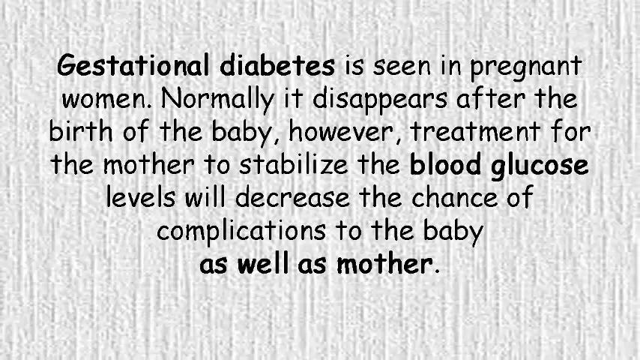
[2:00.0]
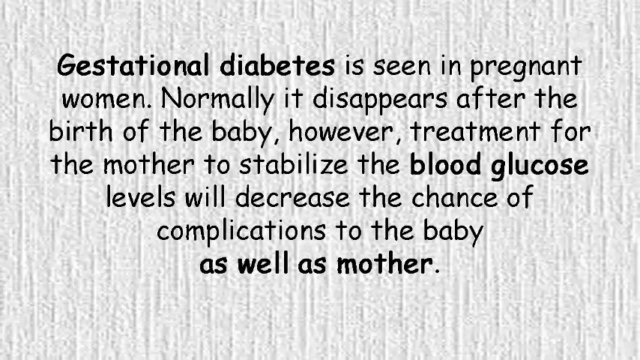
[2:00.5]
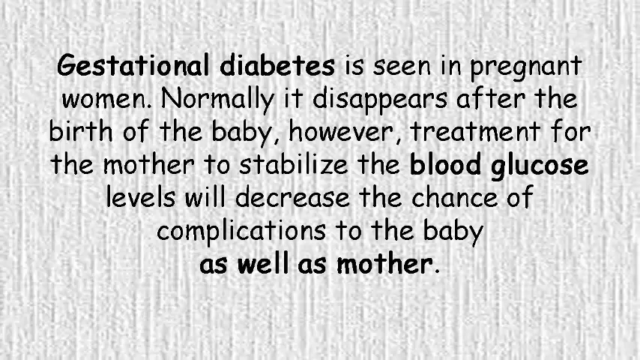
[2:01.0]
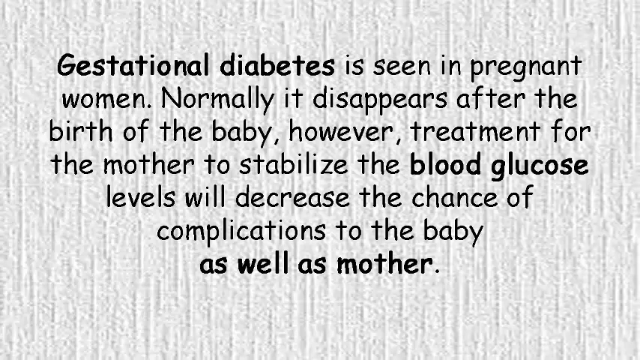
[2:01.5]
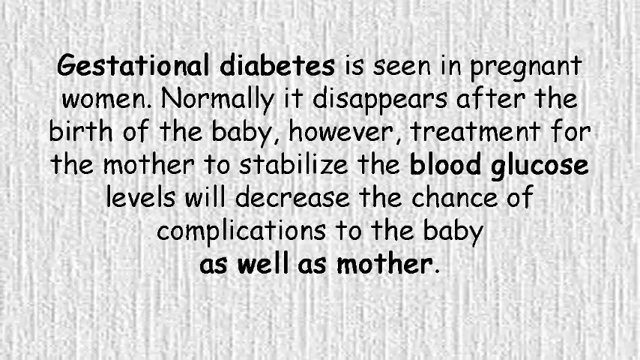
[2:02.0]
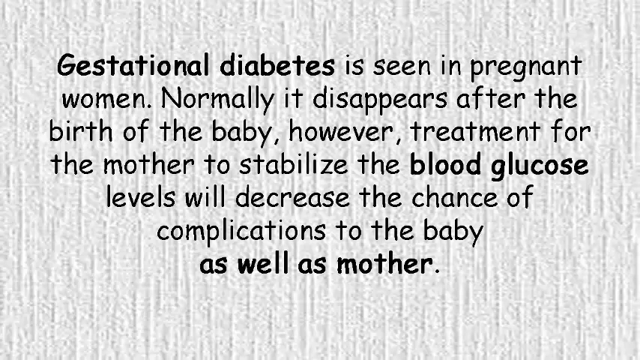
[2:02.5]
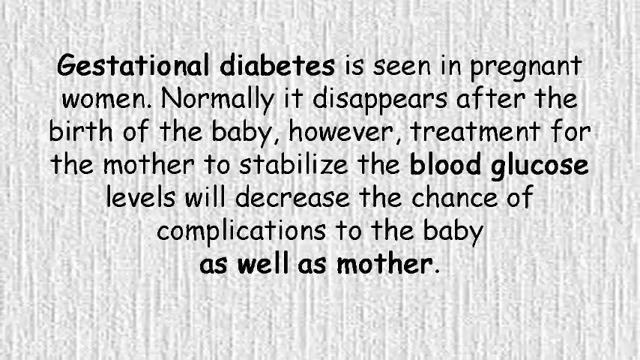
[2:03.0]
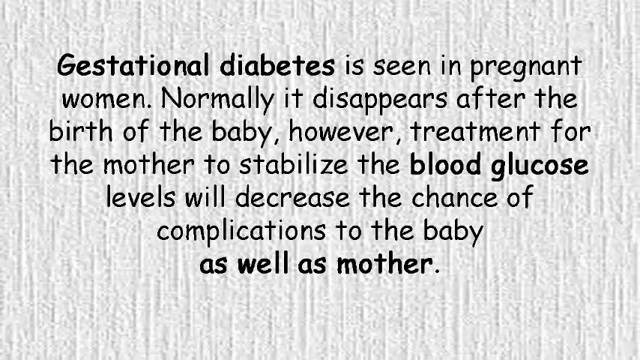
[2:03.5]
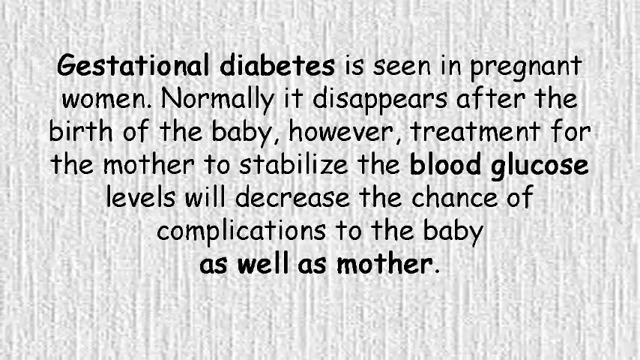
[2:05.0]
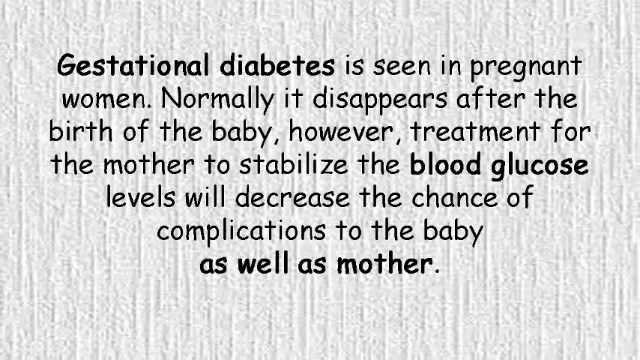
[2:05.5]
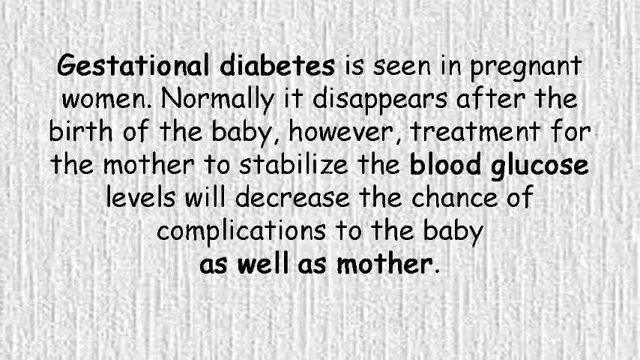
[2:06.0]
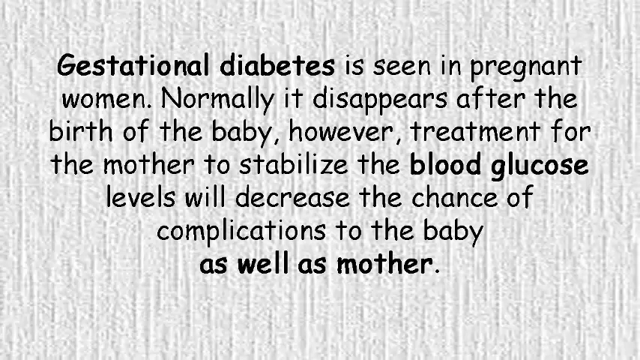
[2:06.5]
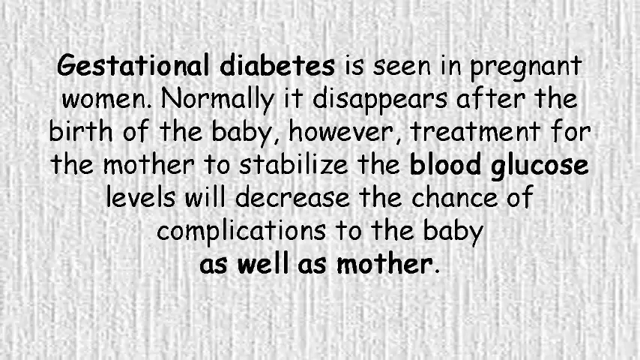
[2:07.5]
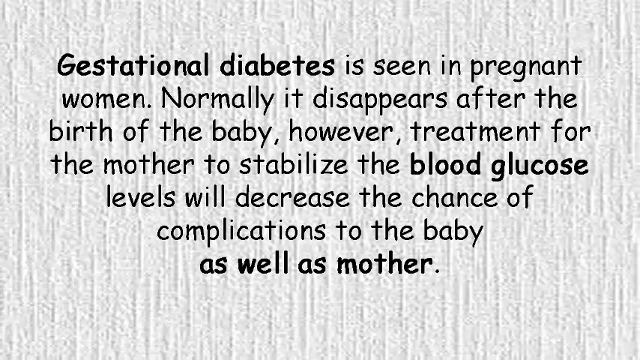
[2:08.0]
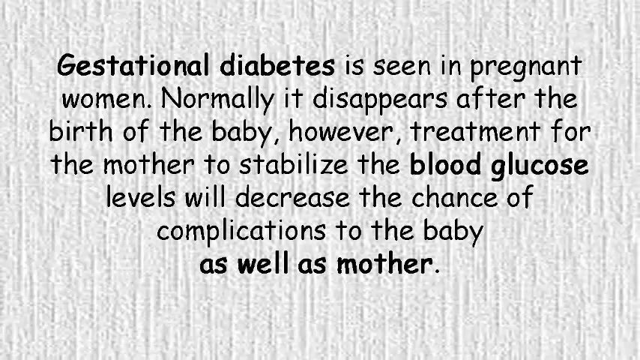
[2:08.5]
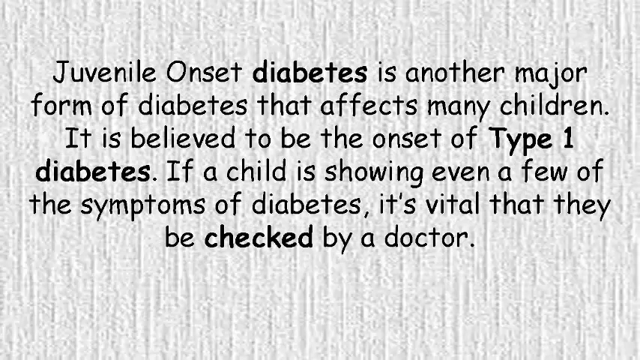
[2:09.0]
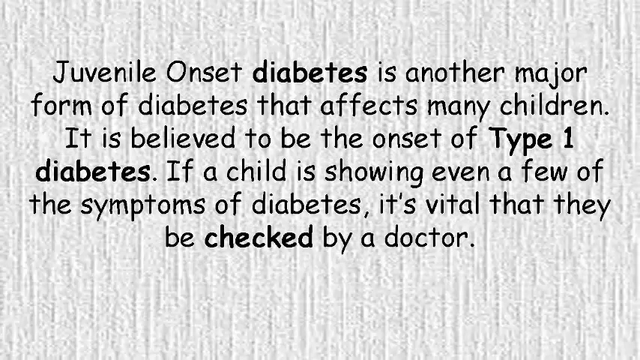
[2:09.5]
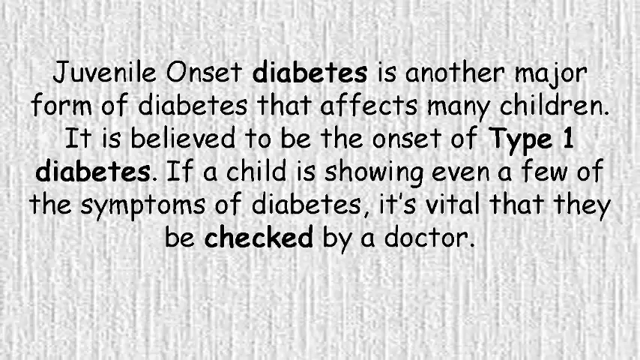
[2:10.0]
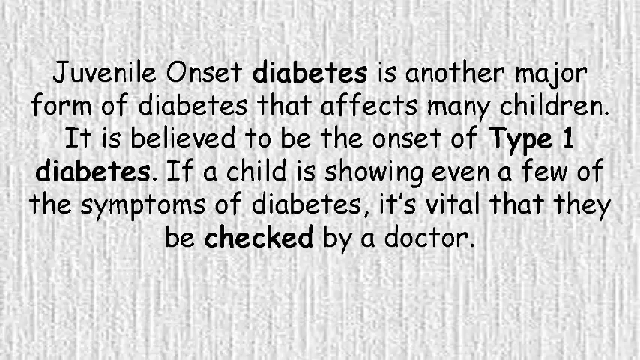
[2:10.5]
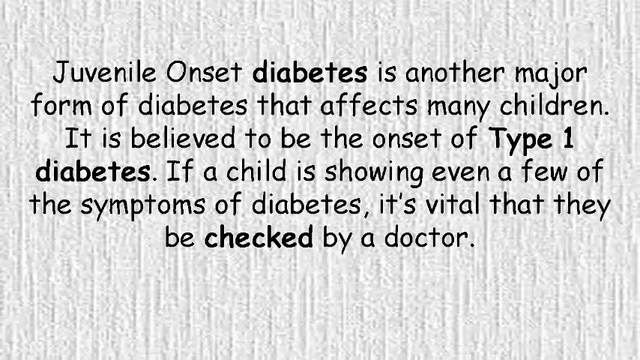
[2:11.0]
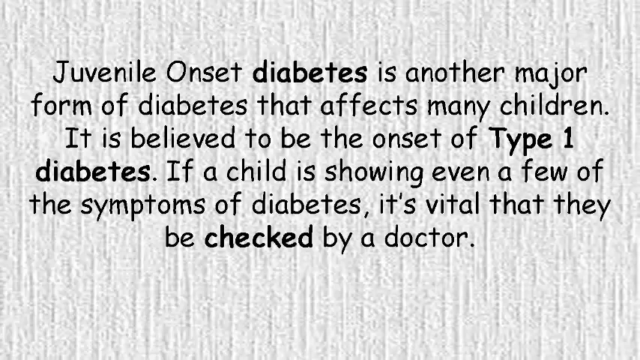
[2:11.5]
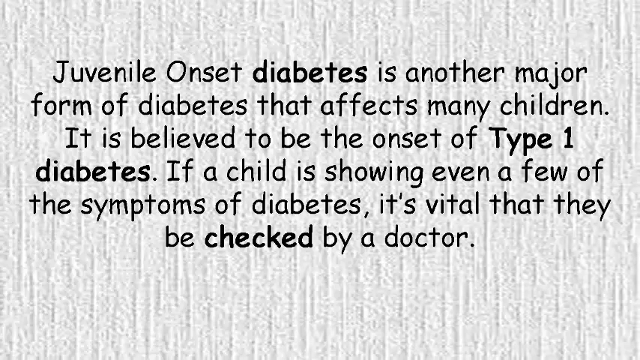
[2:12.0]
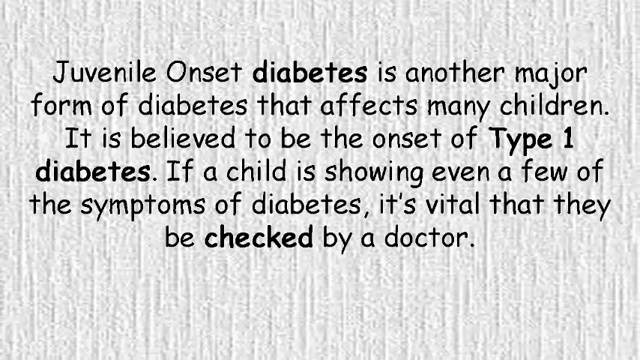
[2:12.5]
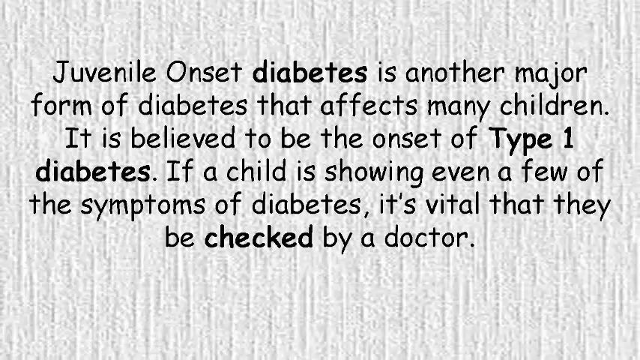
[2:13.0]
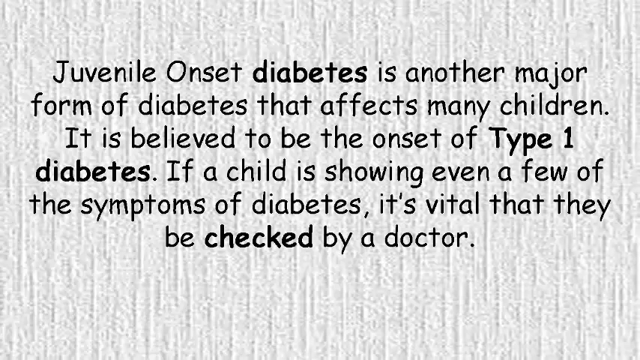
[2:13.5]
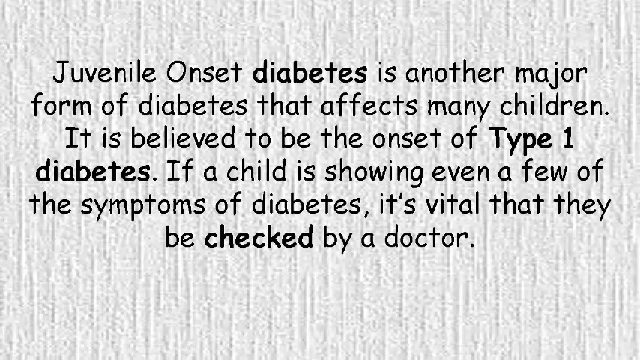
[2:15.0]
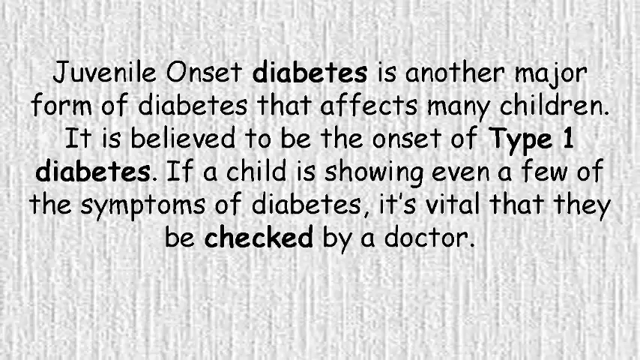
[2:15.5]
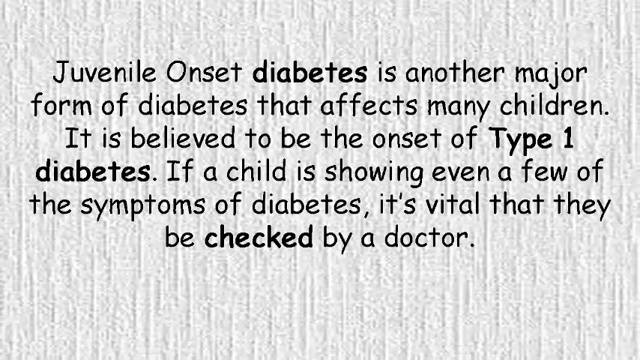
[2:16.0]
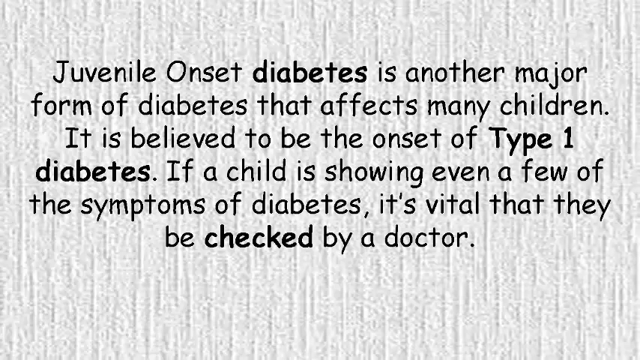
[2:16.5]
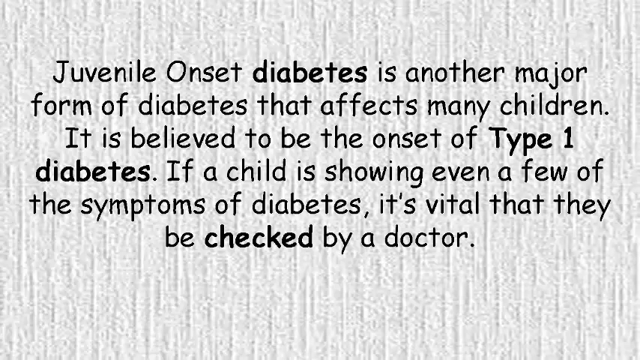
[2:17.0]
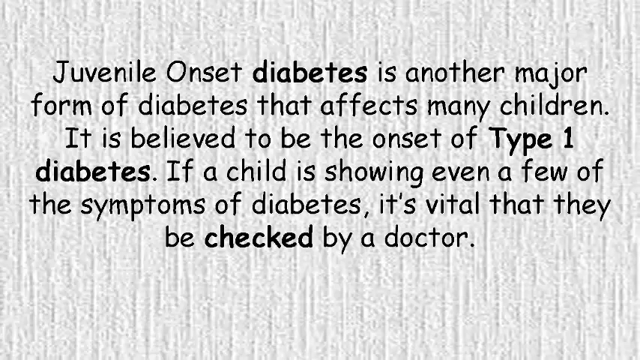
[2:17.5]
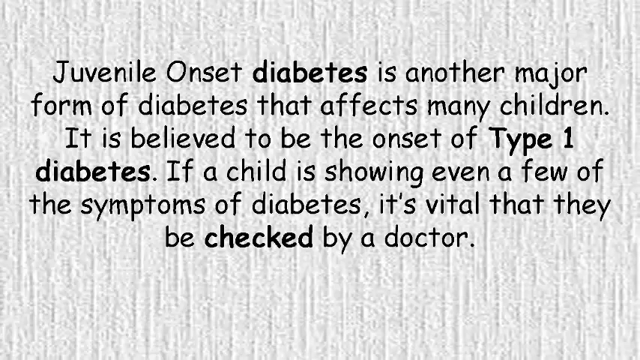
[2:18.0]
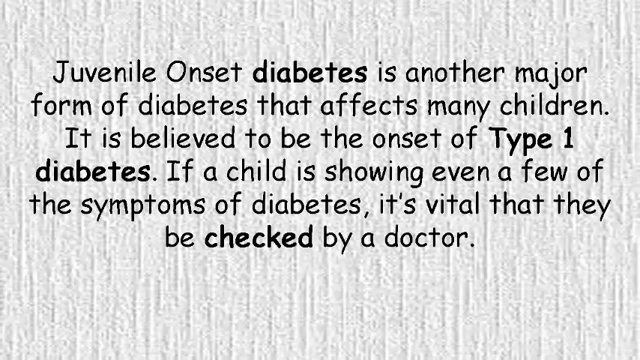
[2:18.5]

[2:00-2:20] A paragraph reads: "Gestational diabetes is seen in pregnant women. Normally it disappears after the birth of the baby, however, treatment for the mother to stabilize the blood glucose levels will decrease the chance of complications to the mother as well." The words "gestational diabetes", "blood glucose" and "as well as mother" are in bold. The next paragraph reads: "Juvenile onset diabetes is another major form of diabetes that affects many children. It is believed to be the onset of type 1 diabetes. If a child is showing even a few of the symptoms of diabetes, it's vital that they be checked by a doctor." The words "diabetes", "type 1 diabetes" and "checked" are in bold. This paragraph stays on screen for quite some time; every paragraph stays on screen for quite a few seconds before switching to the next.